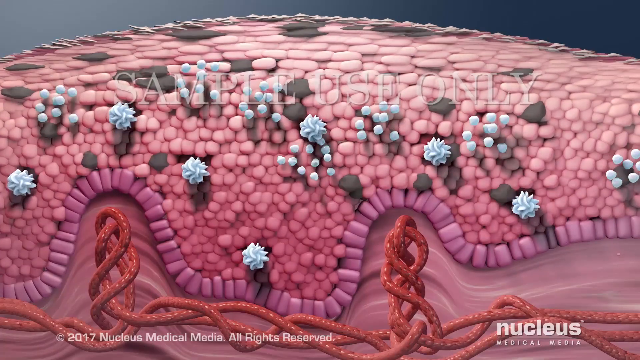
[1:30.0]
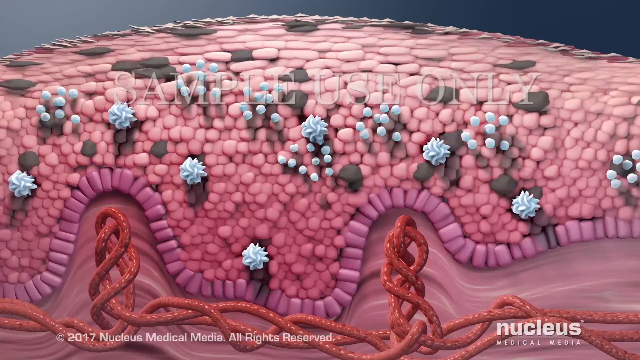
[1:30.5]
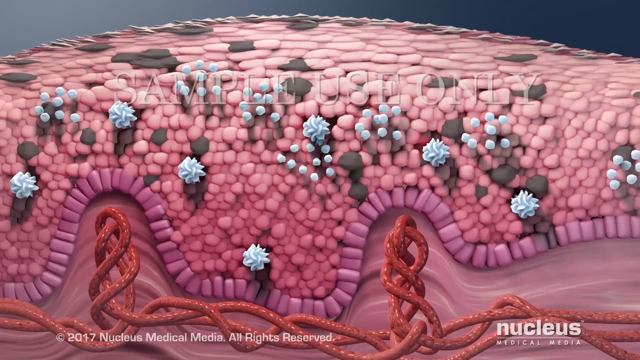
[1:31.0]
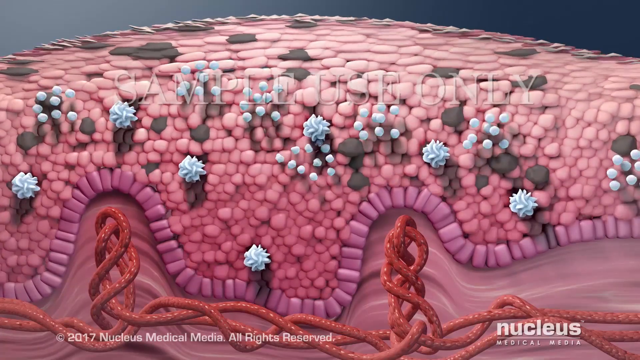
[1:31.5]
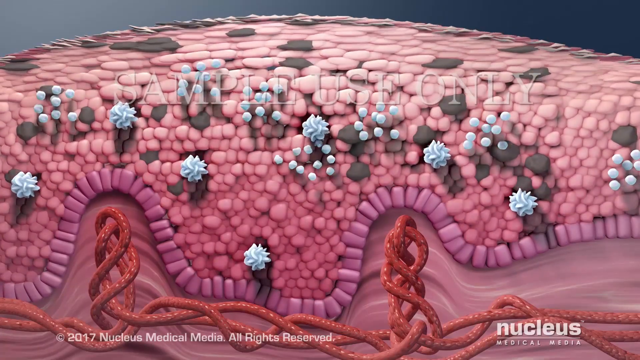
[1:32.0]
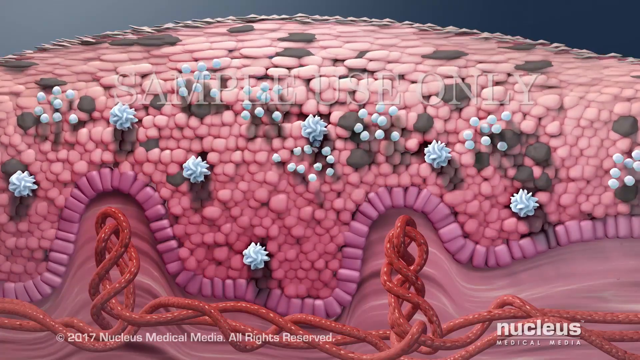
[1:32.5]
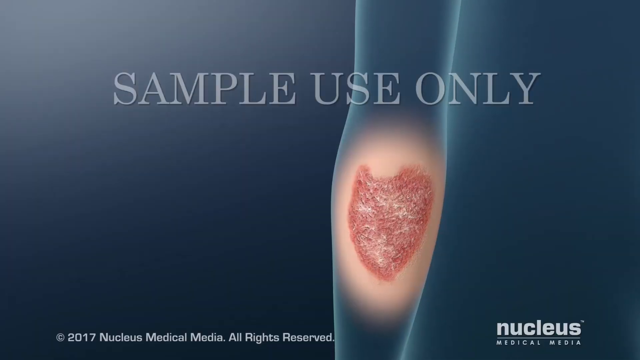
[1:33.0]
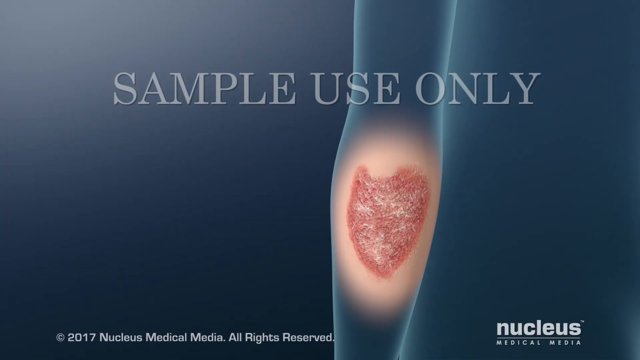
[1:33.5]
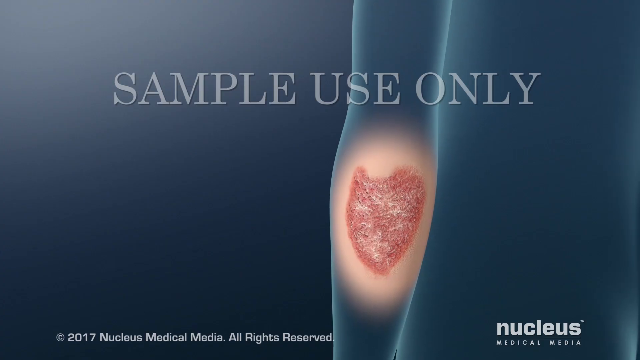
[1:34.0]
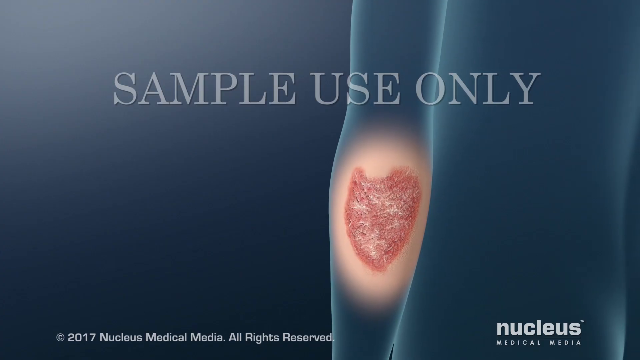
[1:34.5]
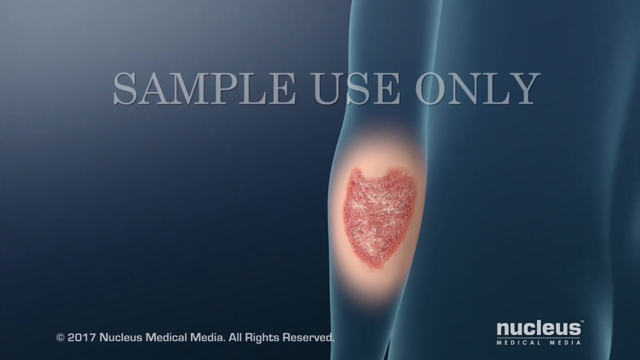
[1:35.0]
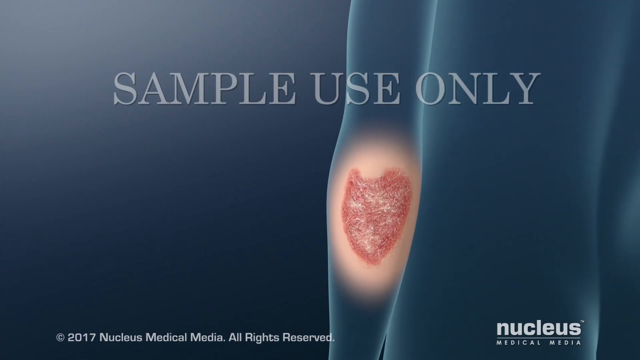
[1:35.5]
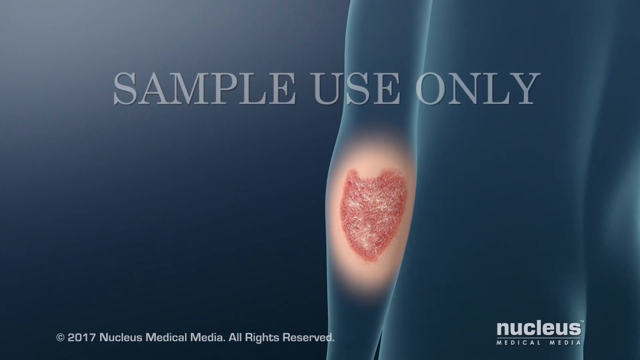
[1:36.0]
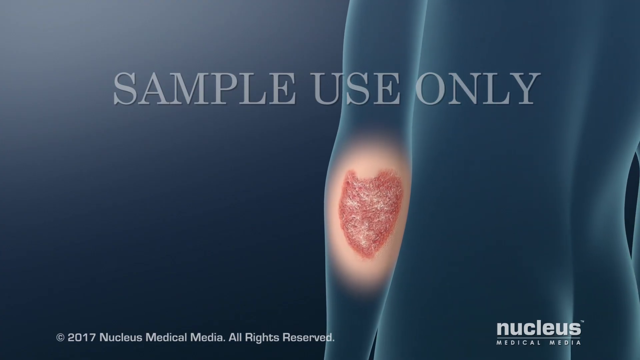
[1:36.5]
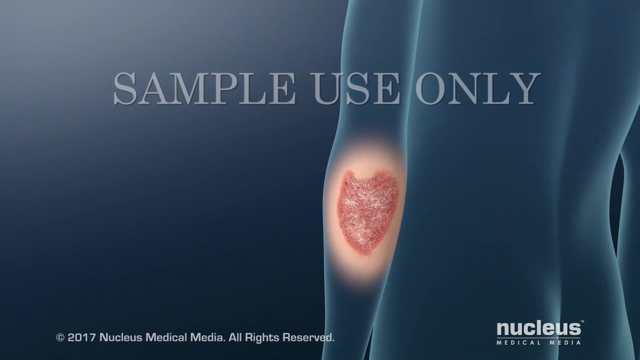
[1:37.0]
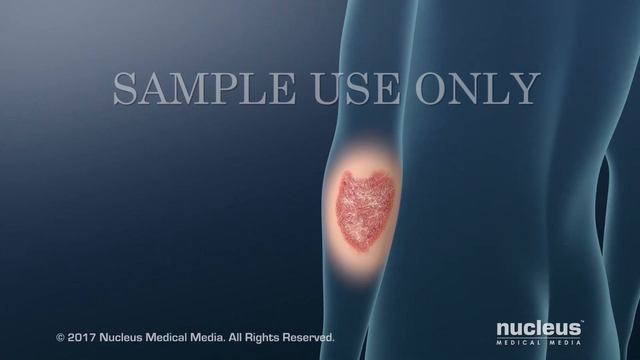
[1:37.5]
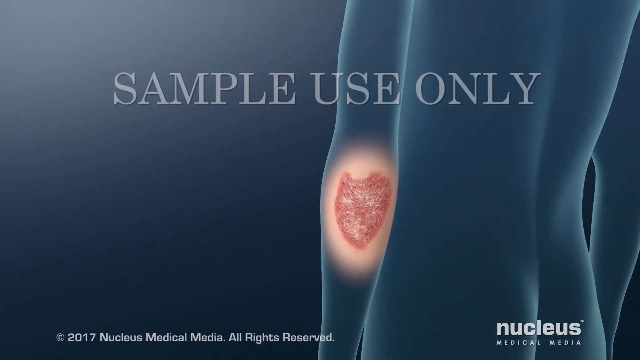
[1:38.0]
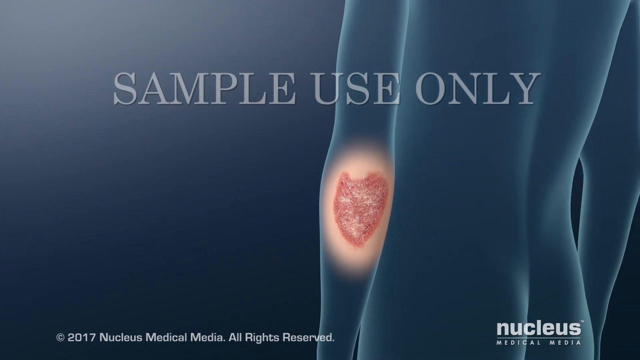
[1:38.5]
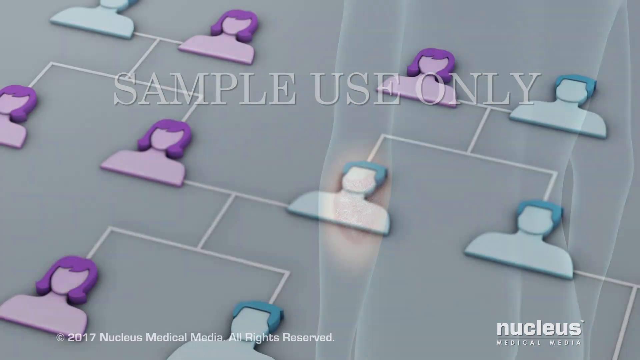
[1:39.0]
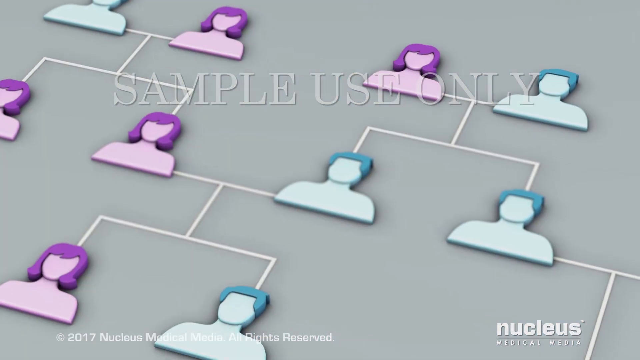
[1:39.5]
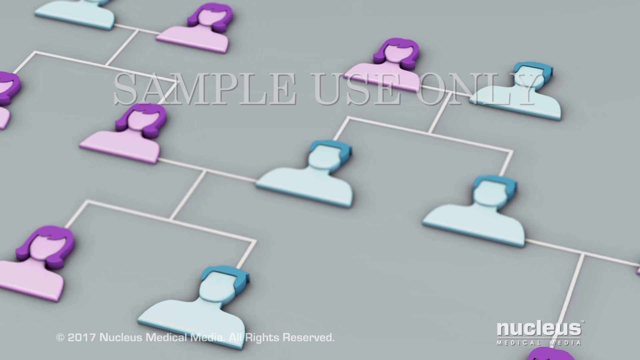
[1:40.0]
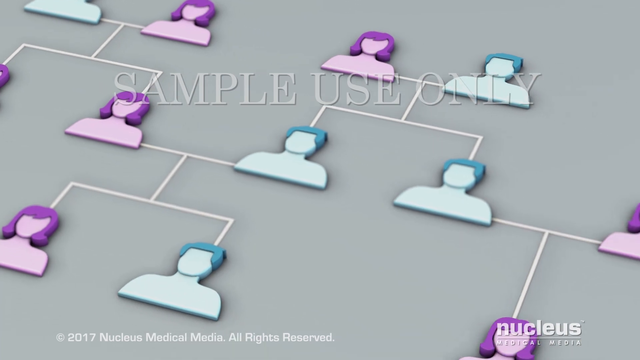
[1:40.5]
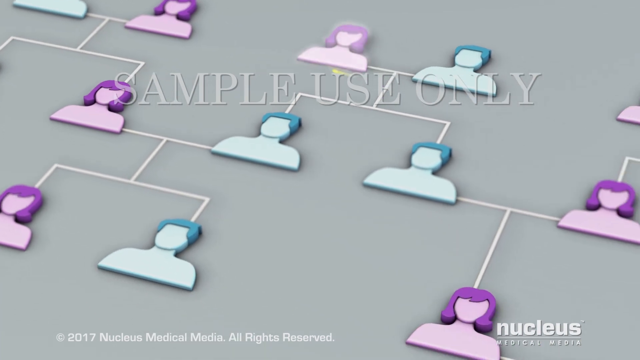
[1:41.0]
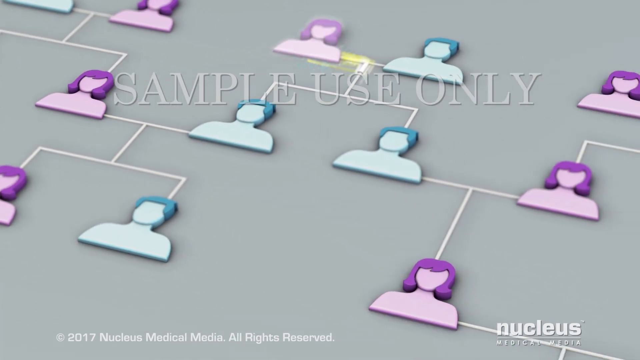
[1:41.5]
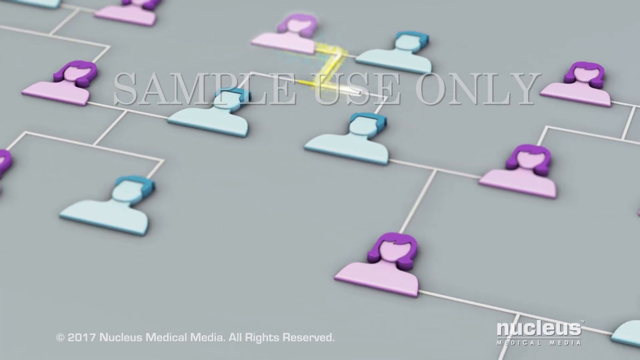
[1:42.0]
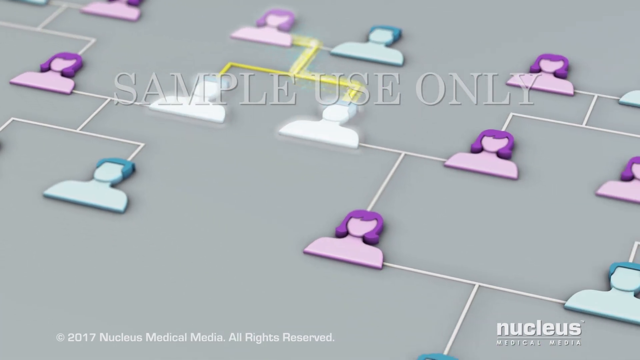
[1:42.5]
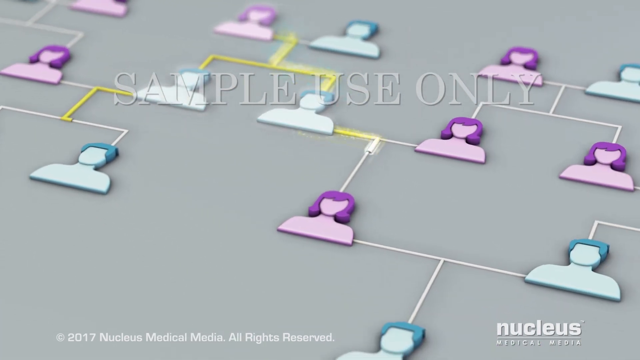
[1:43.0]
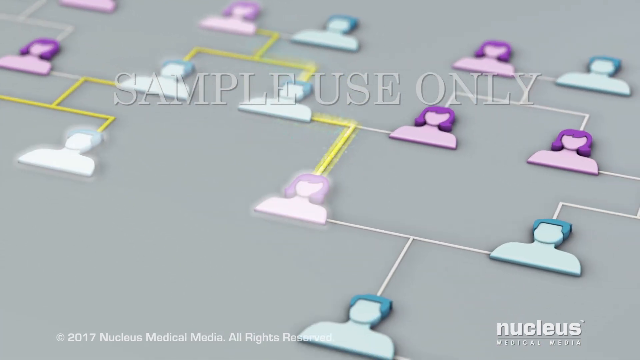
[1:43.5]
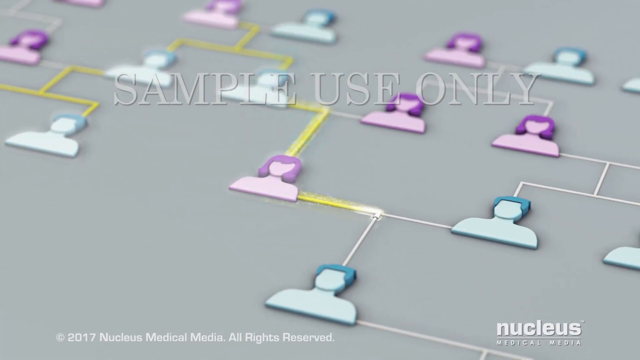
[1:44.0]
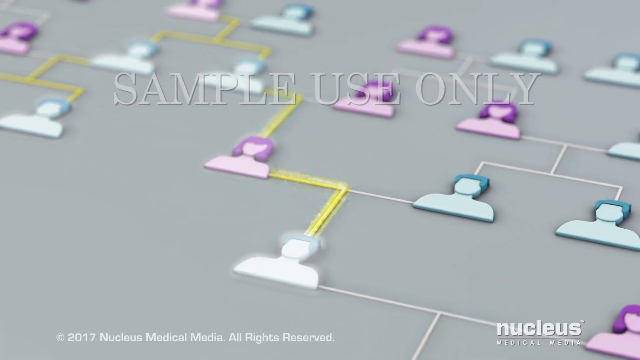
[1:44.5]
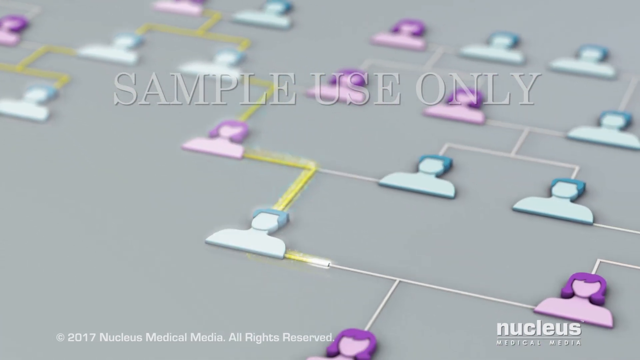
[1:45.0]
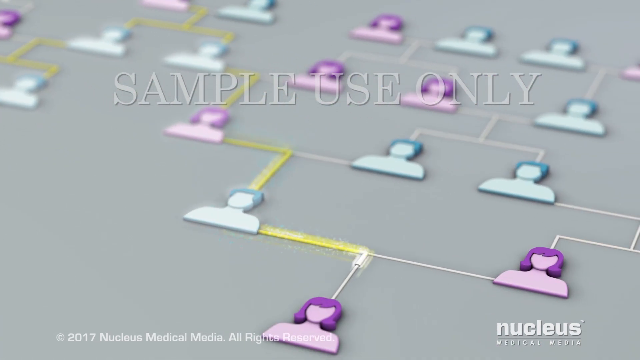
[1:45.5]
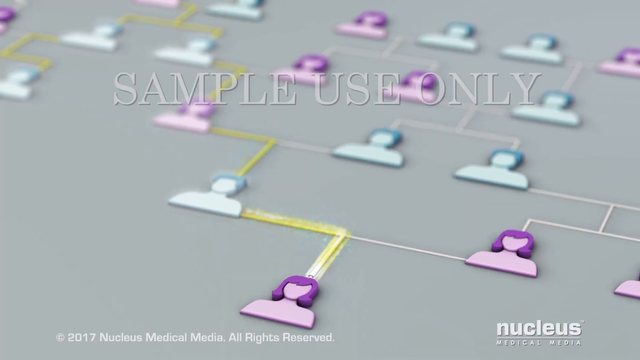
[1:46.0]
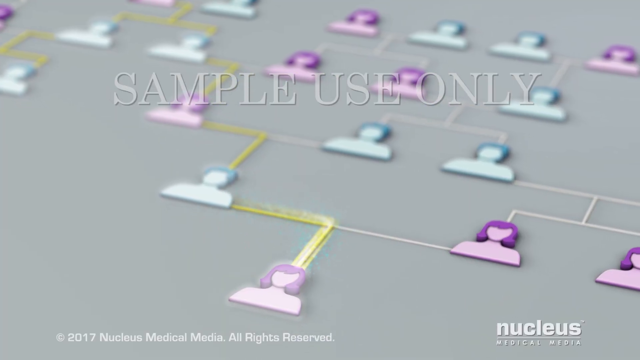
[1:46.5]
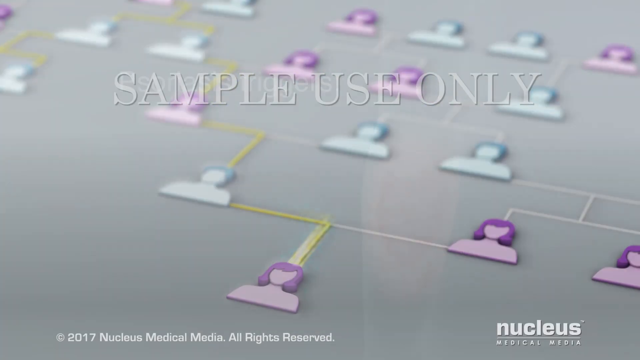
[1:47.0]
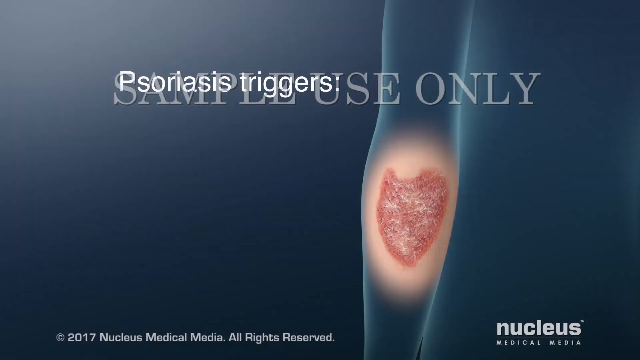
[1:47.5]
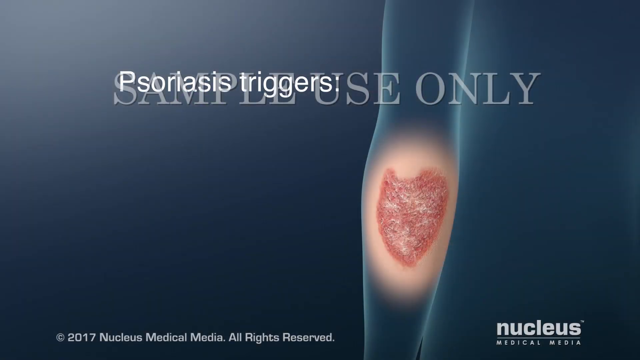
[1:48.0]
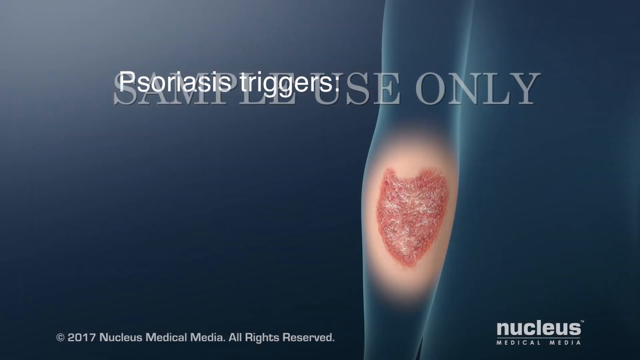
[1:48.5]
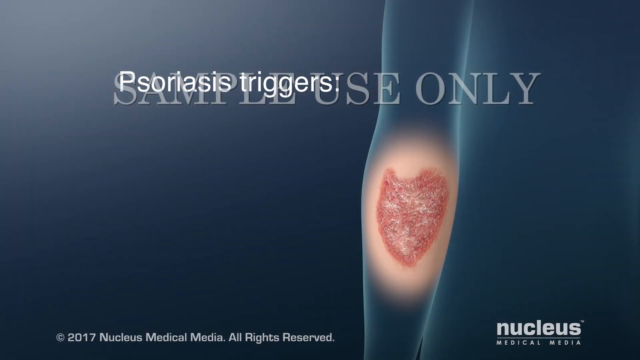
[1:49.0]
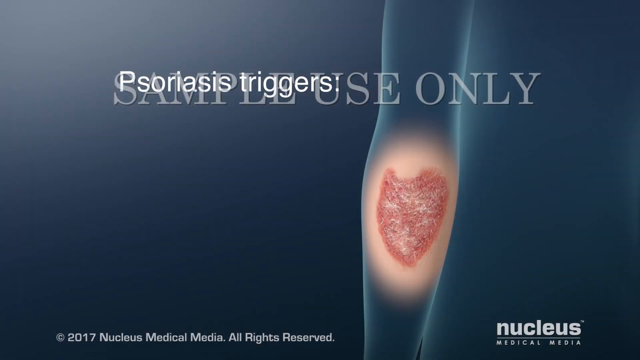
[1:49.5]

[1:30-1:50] The multiplication of the cells continues. The view then returns to the outside of the body, showing the back of the arm near the elbow with a red discoloration of the skin, a sort of reddish, rash-looking mass. Next comes what looks like a family tree, almost like an org chart, apparently showing genetic family history, with an animated yellow line going down the tree as if passing from generation to generation. At the very end, the view returns to inside the body, showing how the infection has spread: many dark cells surrounded by immune cells, grown substantially since the beginning of the video.